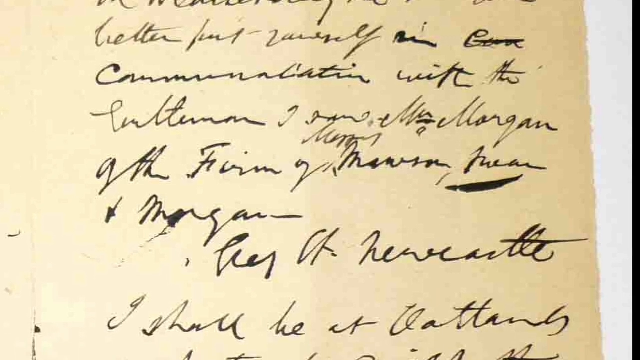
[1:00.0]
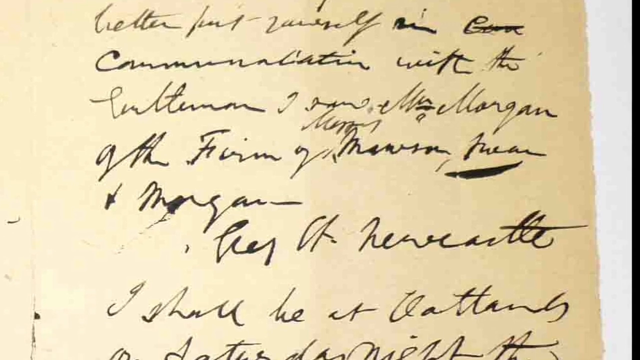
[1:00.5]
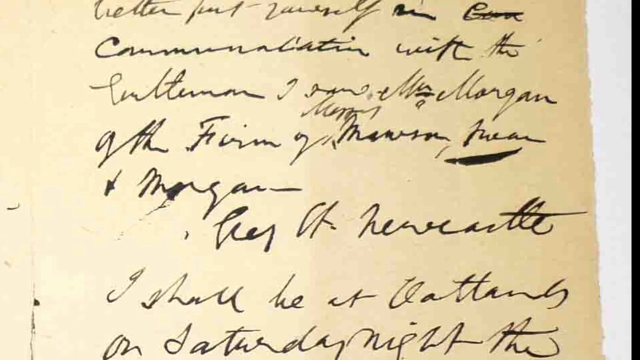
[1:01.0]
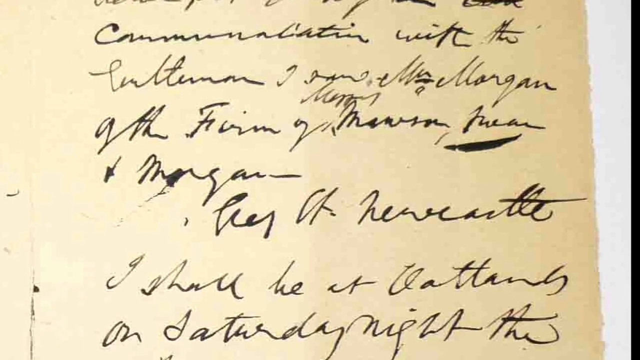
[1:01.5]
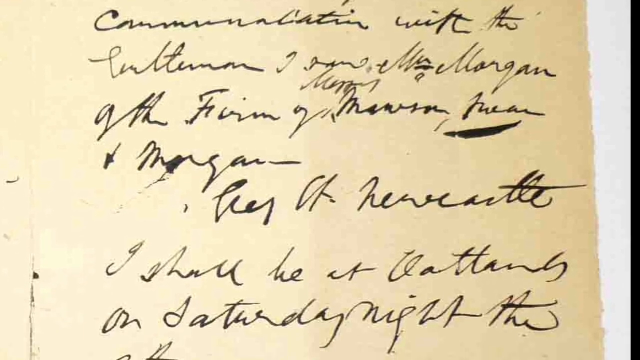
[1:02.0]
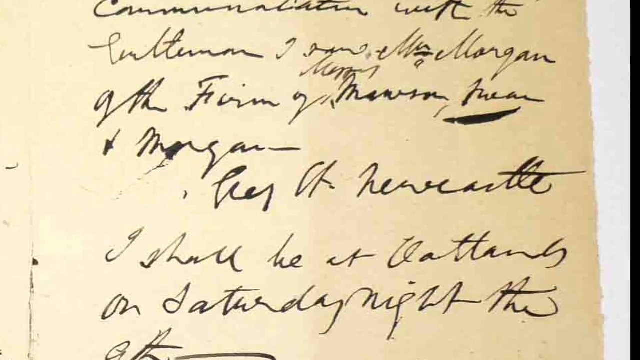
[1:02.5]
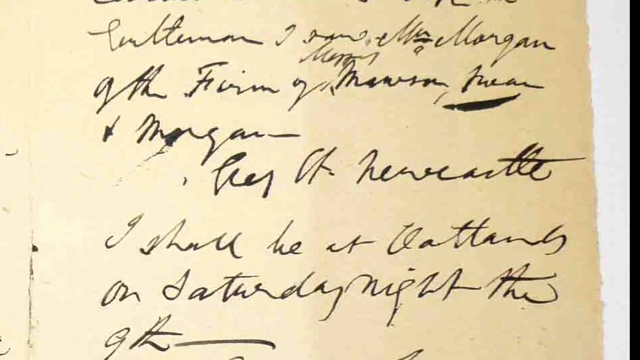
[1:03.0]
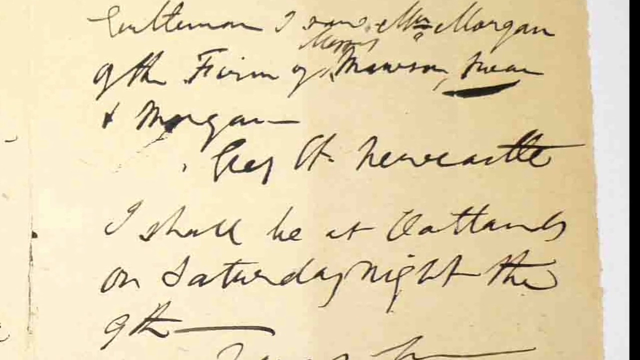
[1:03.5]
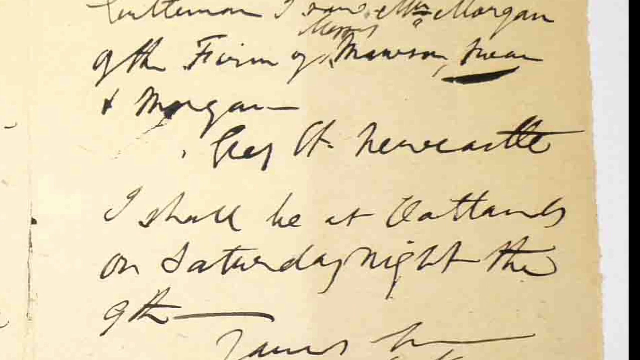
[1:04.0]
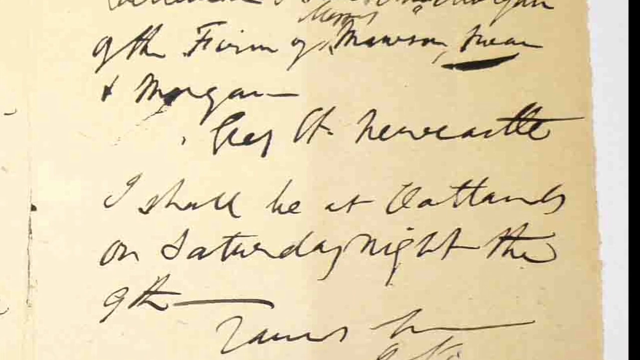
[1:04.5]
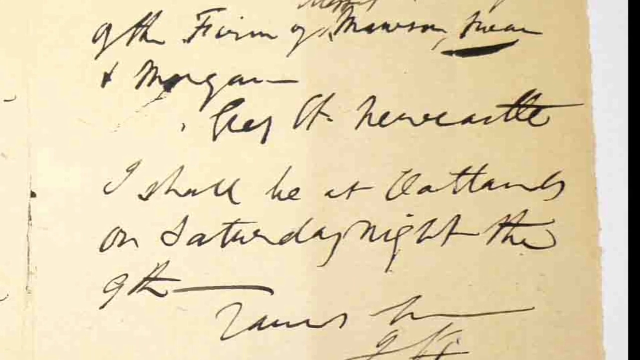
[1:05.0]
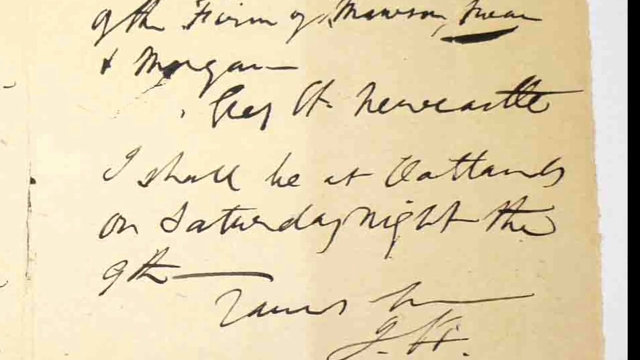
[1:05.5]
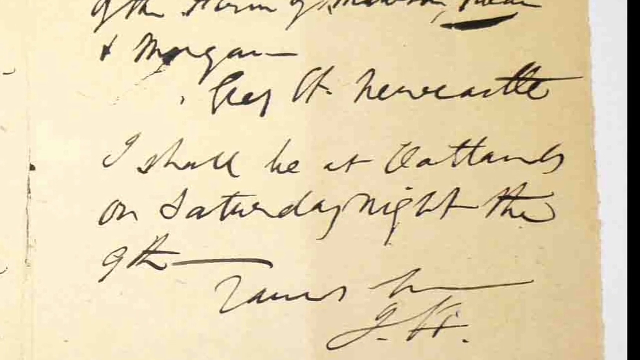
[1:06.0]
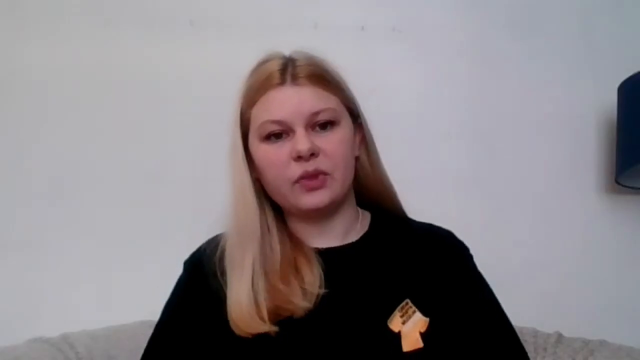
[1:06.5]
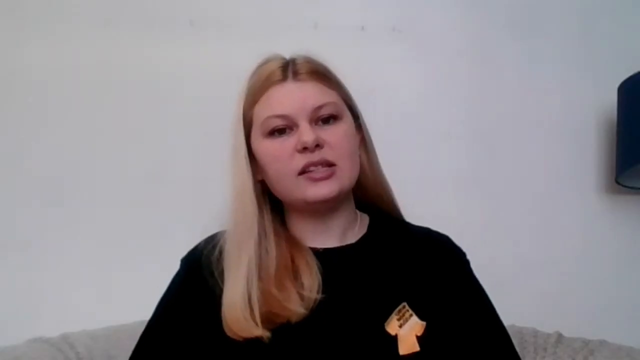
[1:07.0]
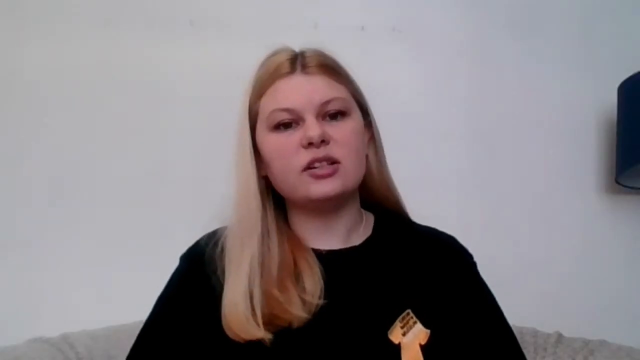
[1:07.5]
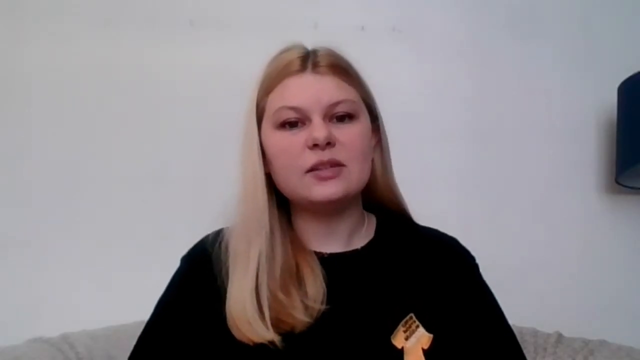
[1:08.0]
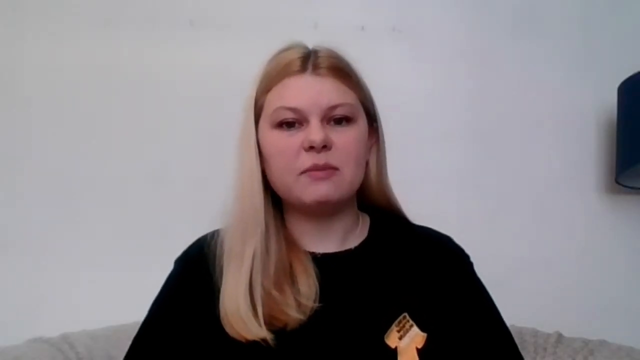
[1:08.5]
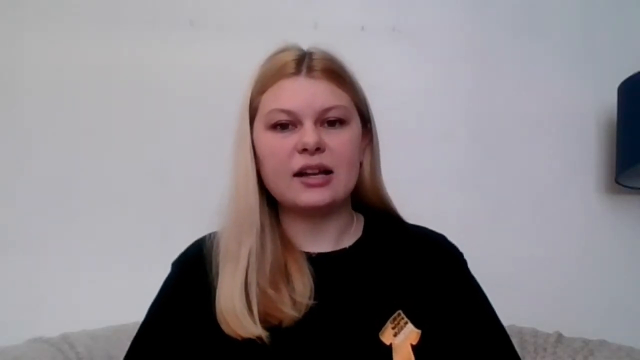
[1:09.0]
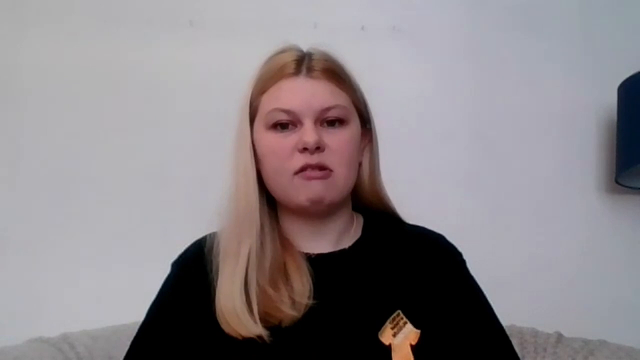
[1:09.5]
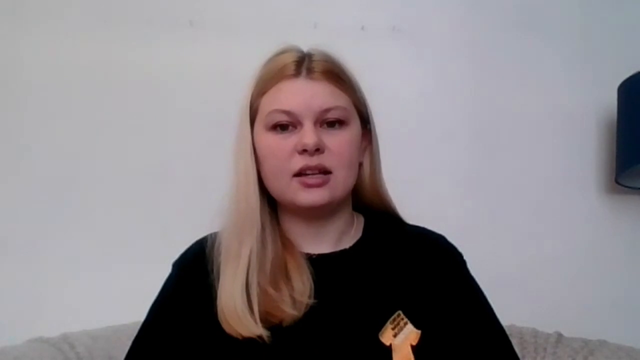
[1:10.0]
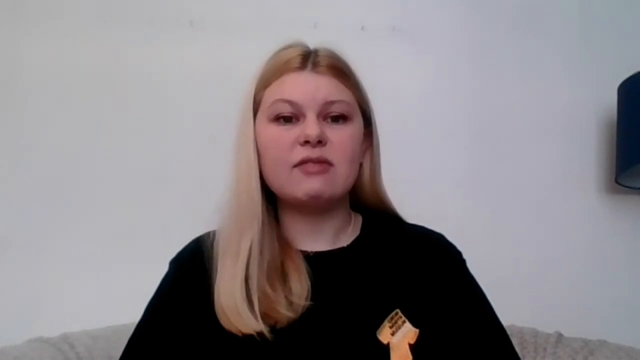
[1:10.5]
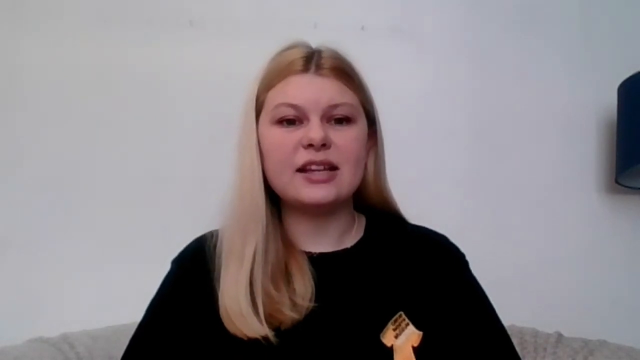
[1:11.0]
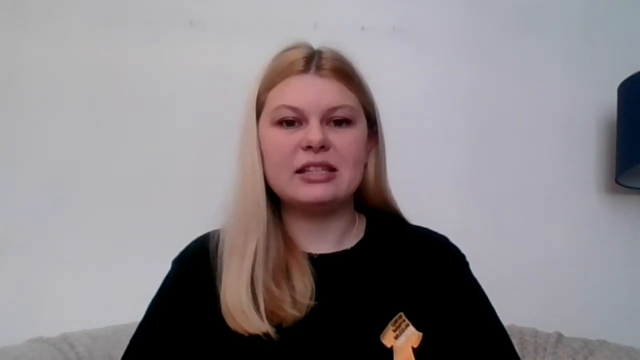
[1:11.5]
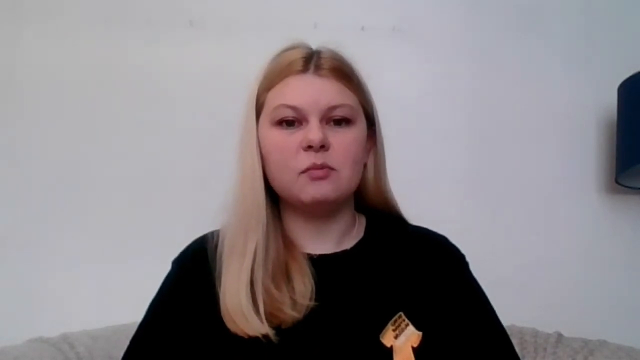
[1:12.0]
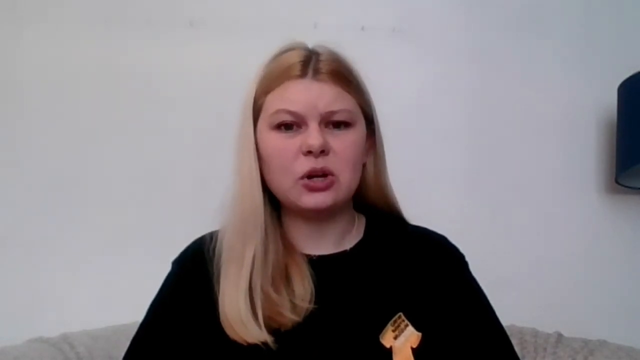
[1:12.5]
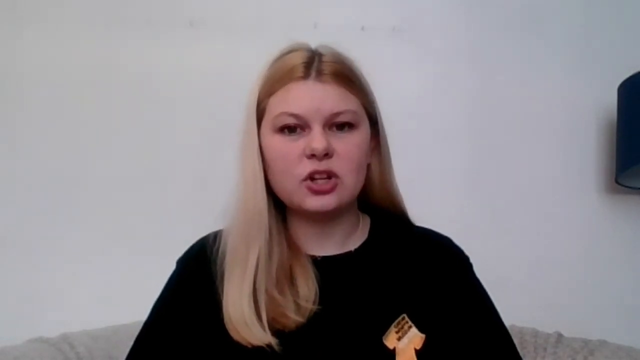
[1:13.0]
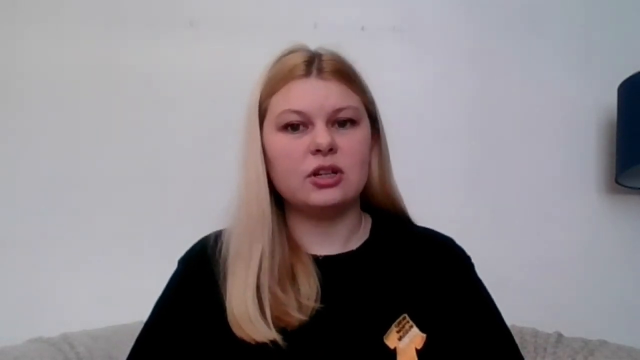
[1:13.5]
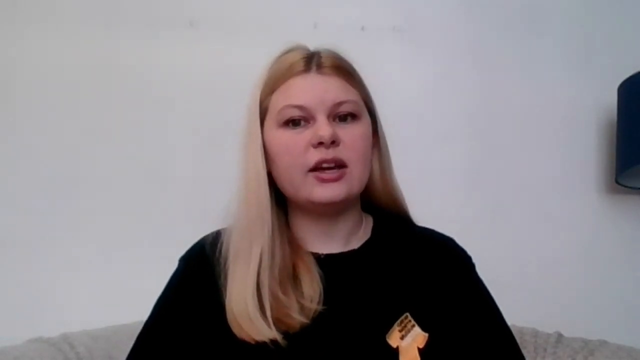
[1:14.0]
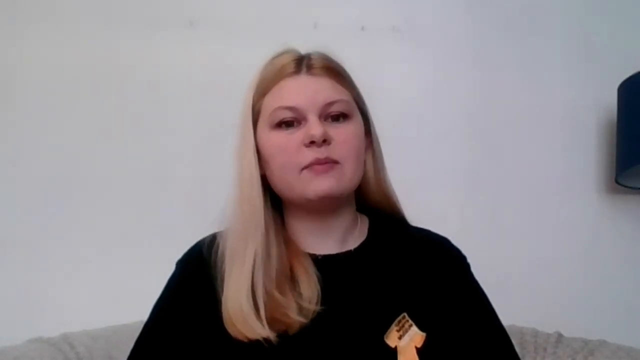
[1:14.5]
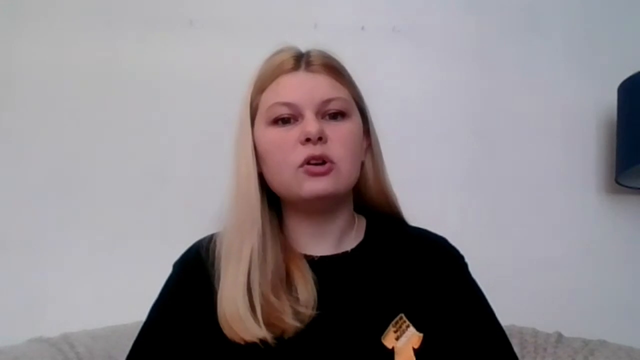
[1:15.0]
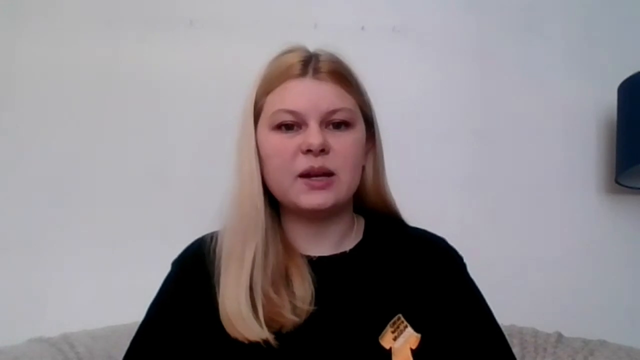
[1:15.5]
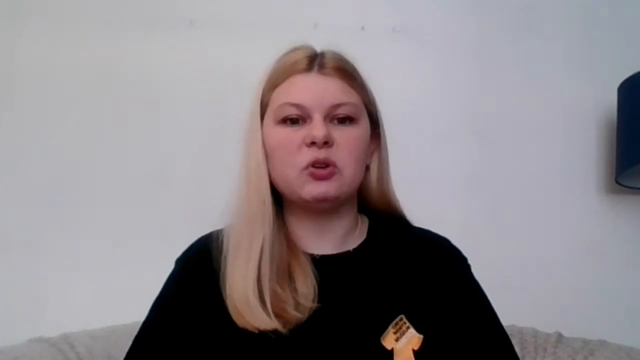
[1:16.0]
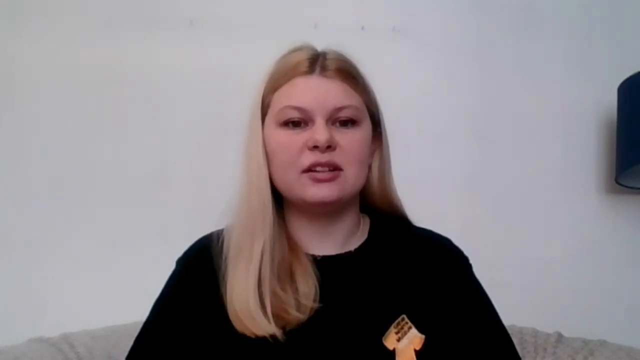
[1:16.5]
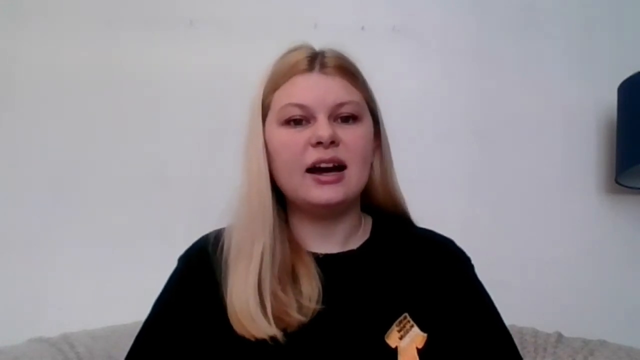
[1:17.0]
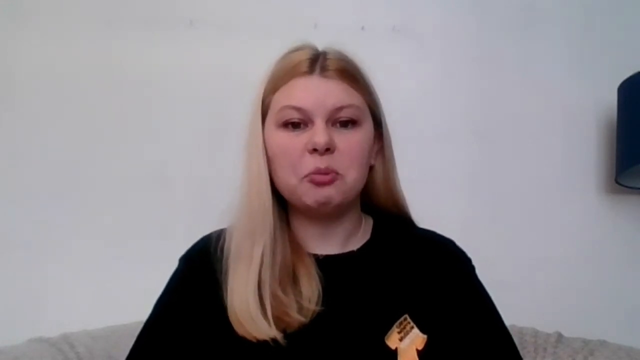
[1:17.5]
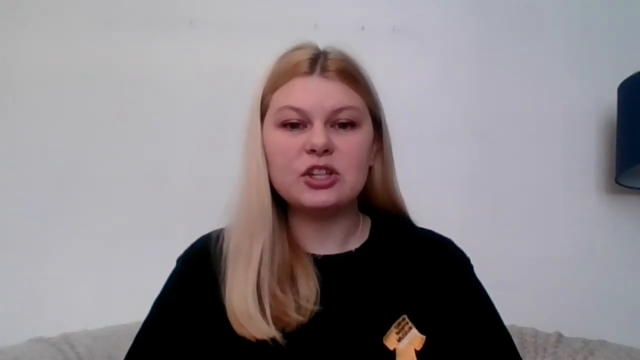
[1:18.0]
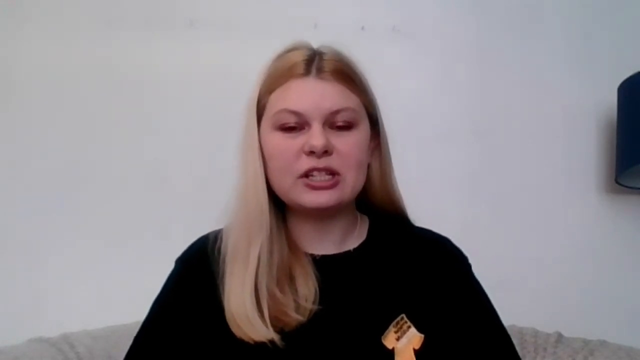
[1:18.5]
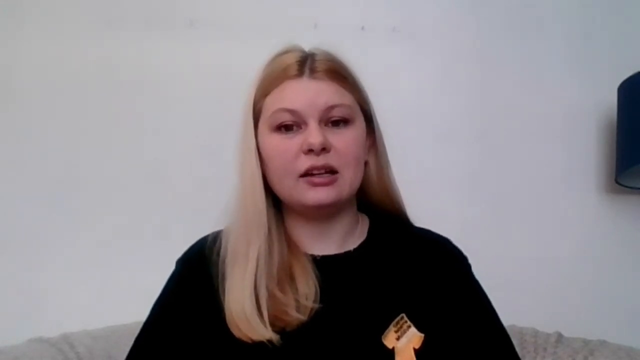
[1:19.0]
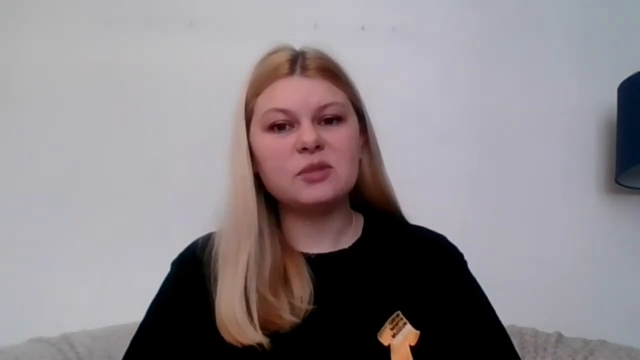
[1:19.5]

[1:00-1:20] The letter, written in black ink, is still shown, laid on a flat white background; a full view of its front side and a full view of its back side are given. The video returns to the woman with blonde hair parted in the middle, who is talking while sitting in a heather gray chair. She wears a black crewneck-type t-shirt with what appears to be a gold arrow on the left chest area. Her eyes move back and forth, almost as if she is reading a teleprompter. A blue lampshade appears in the background on her left-hand side, and shadows are visible on one side.